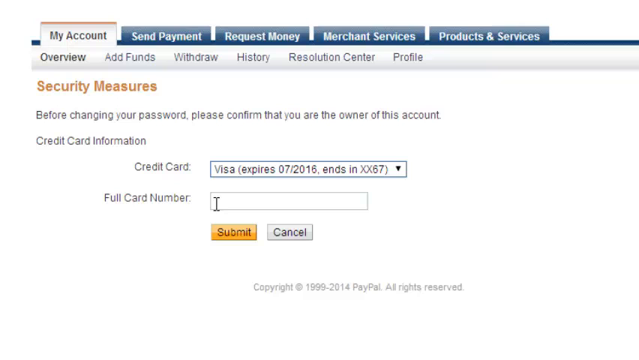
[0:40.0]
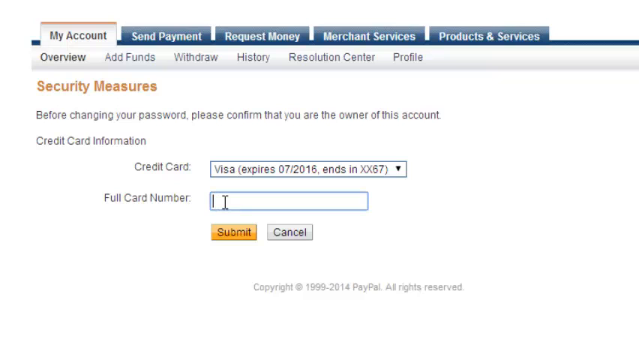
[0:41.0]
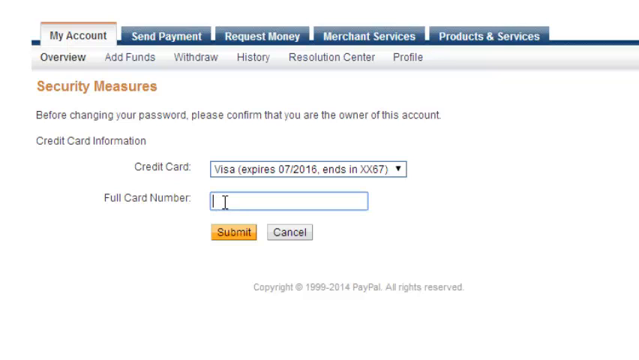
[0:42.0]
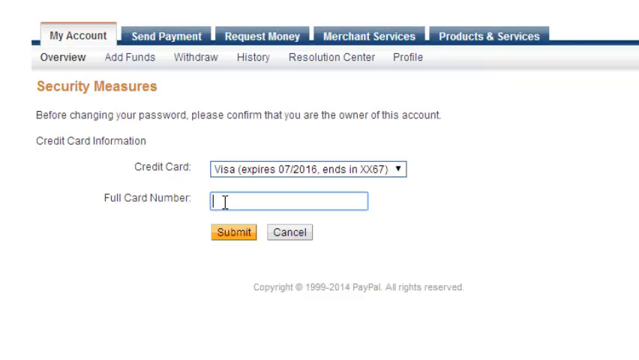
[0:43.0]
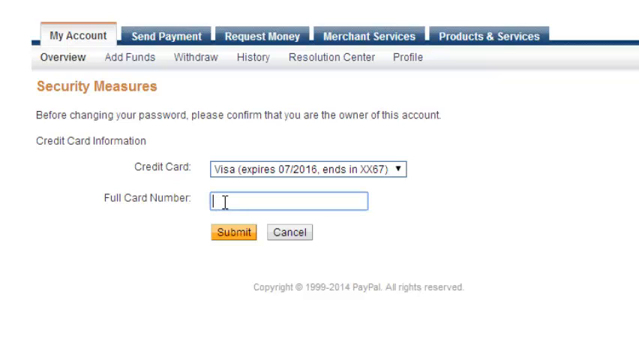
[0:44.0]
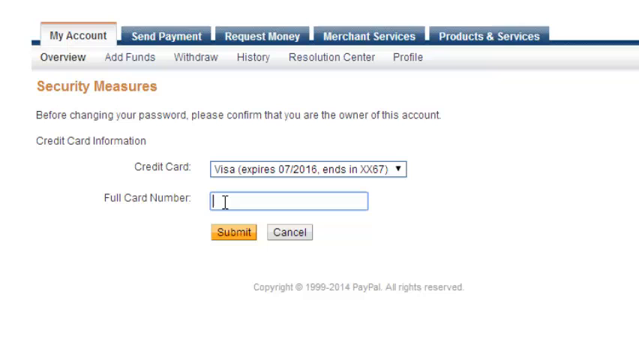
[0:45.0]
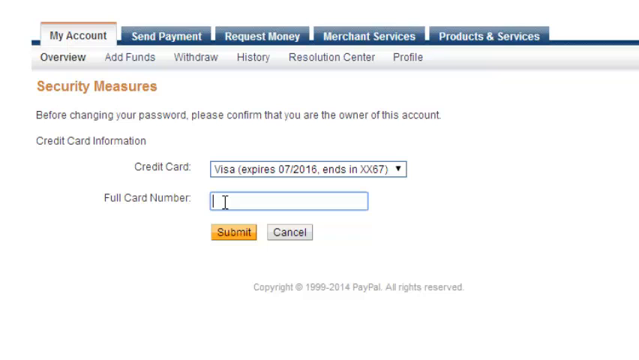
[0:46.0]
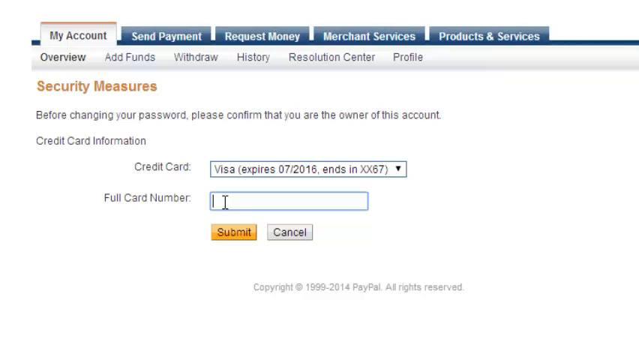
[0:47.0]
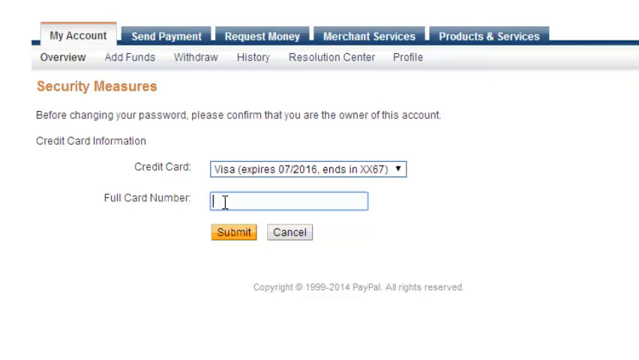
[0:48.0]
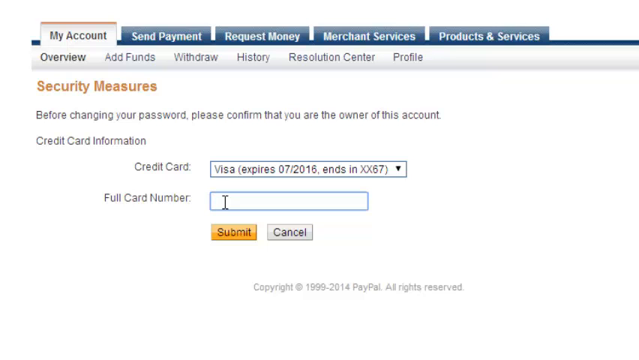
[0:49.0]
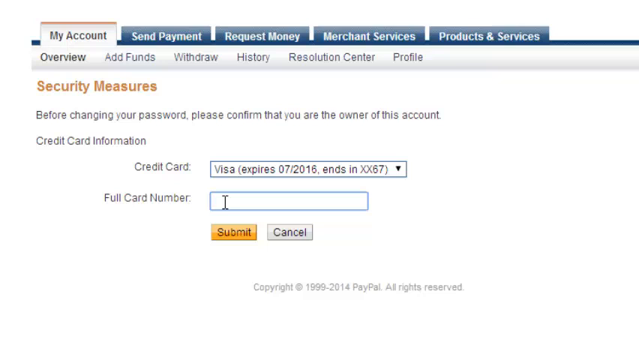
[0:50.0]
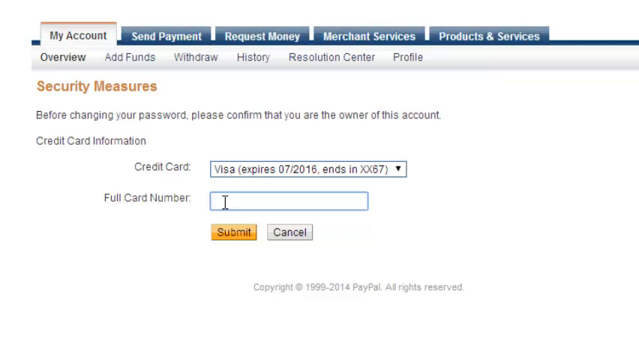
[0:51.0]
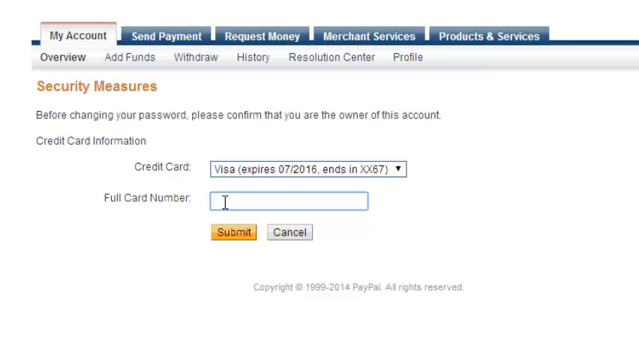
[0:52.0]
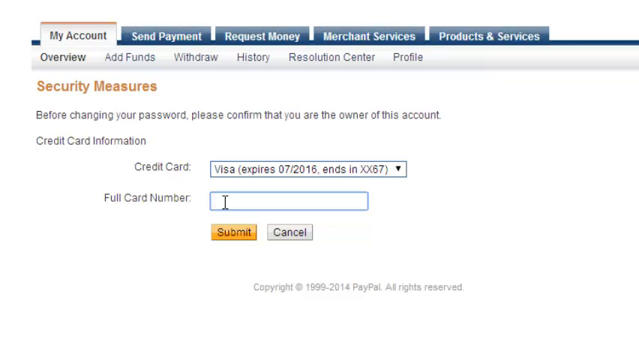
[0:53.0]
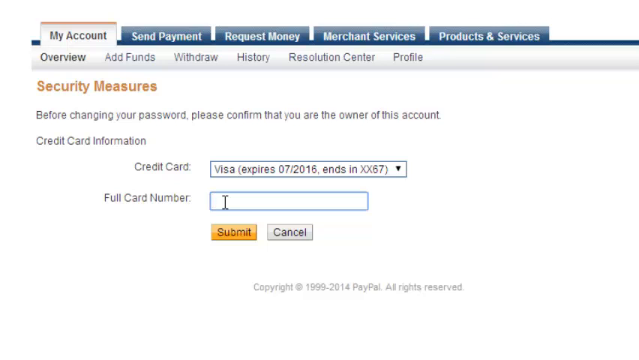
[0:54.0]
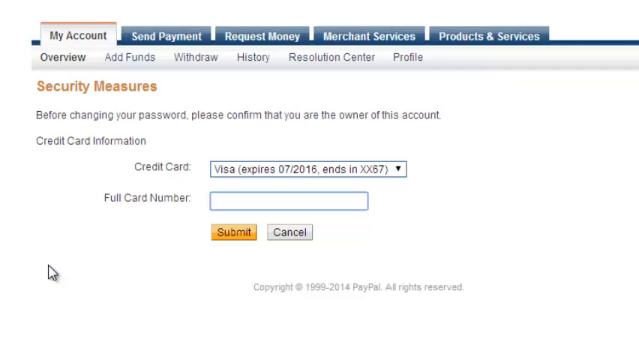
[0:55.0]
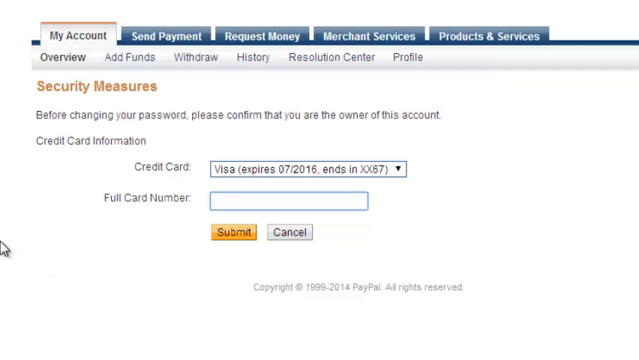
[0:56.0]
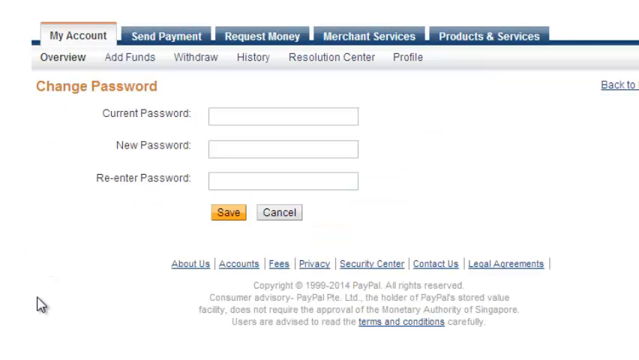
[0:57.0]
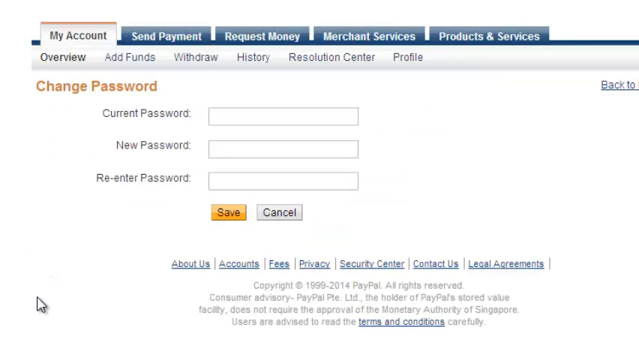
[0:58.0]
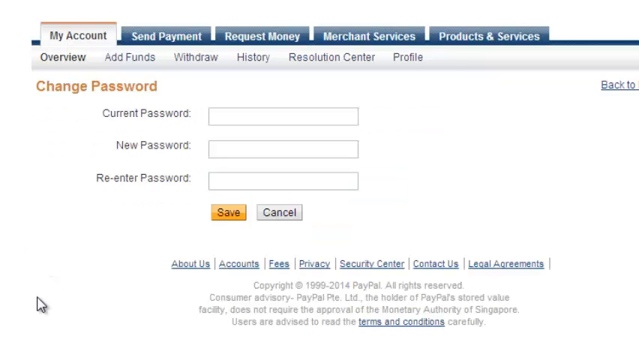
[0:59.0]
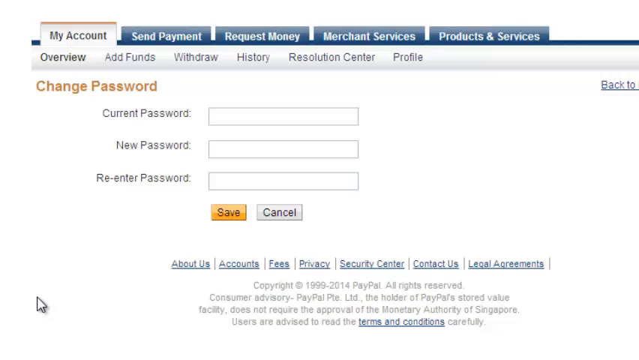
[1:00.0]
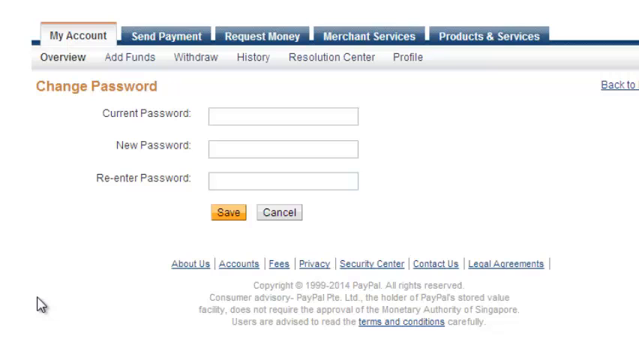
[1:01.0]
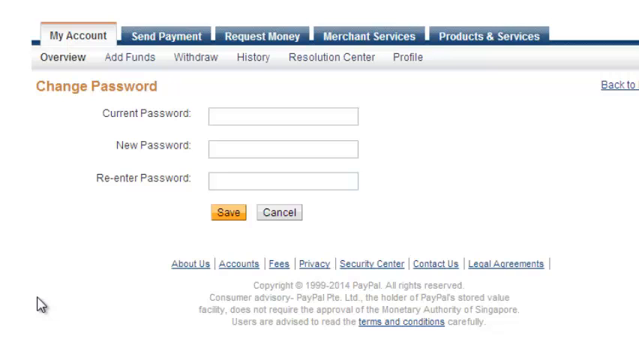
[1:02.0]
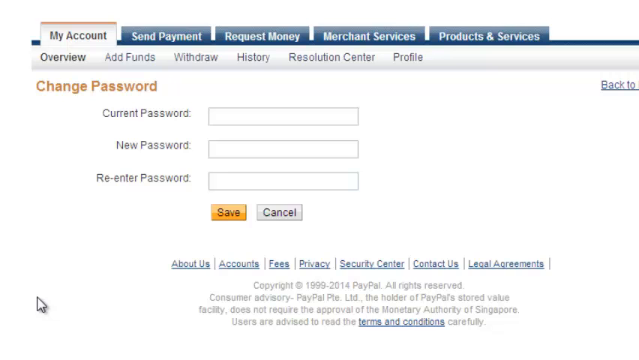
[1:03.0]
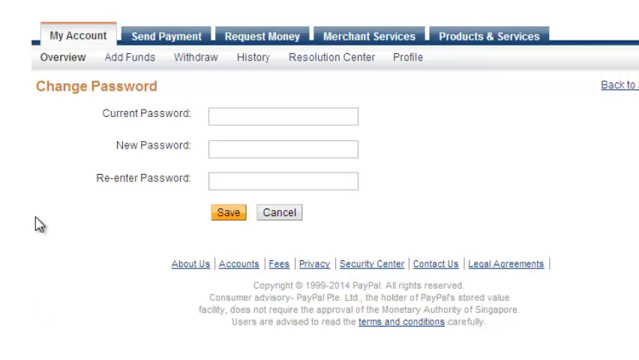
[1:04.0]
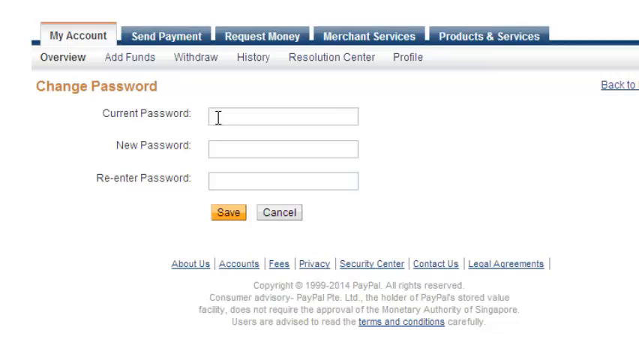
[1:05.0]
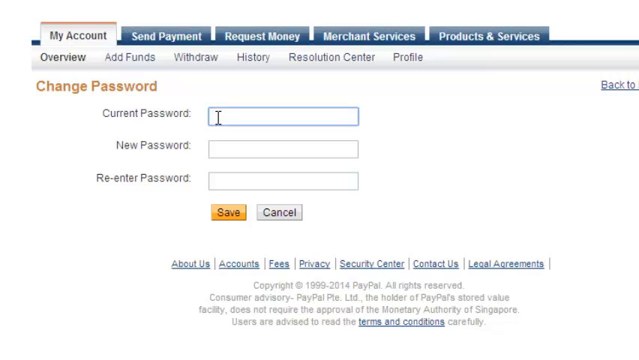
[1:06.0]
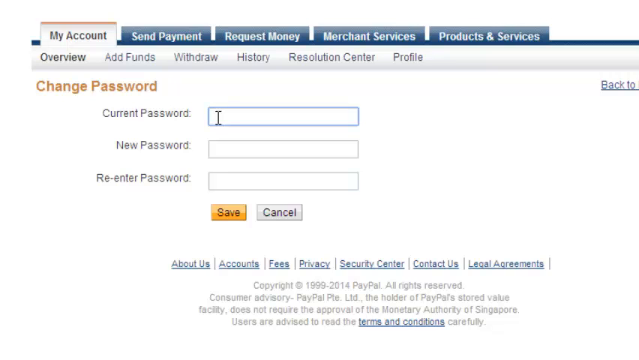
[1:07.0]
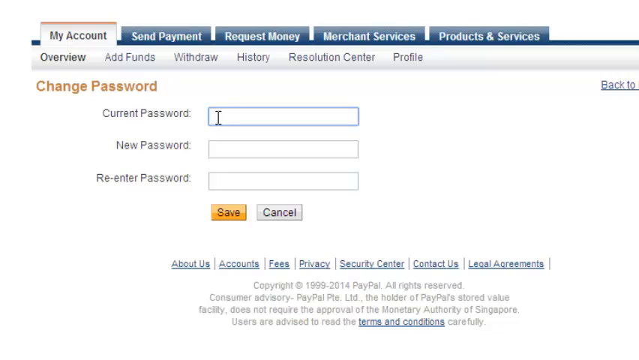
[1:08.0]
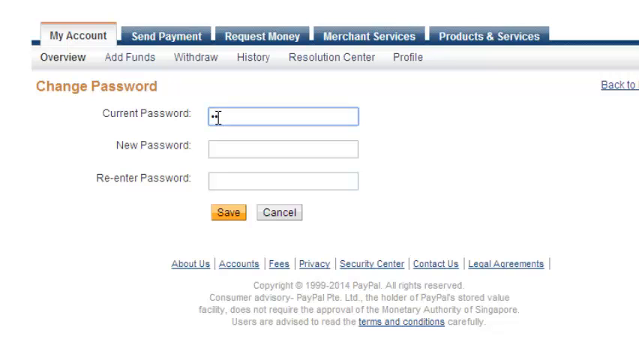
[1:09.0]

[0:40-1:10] What looks like a website is in its security measures section, with a highlighted "my account" tab. The page says "credit card" with a drop-down menu to the right, and underneath it says "full card number" with a text box that the cursor seems to hover over; a blinking cursor is visible in it. Below are a yellow submit button and, to its right, a cancel button. The cursor moves toward the left side of the screen, and the page navigates to one that says "change password". Underneath it says "current password" with a box to the right, then "new password" with an input box on the right, and "re-enter password" text on the left with an input box on the right. Below is a yellow button that says "save" and, to its right, a gray button that says "cancel".